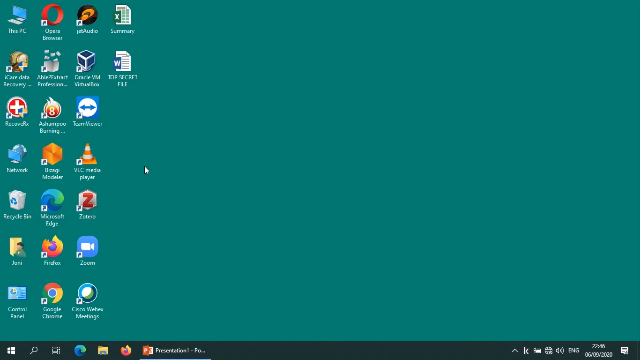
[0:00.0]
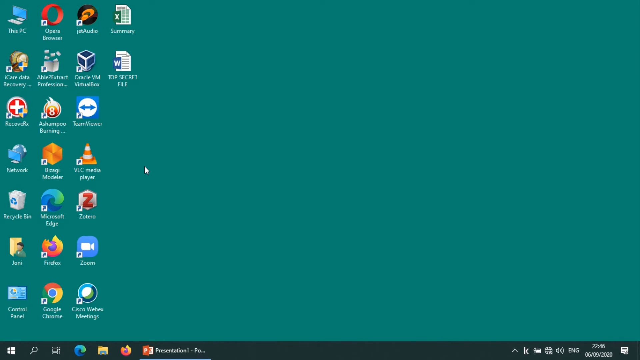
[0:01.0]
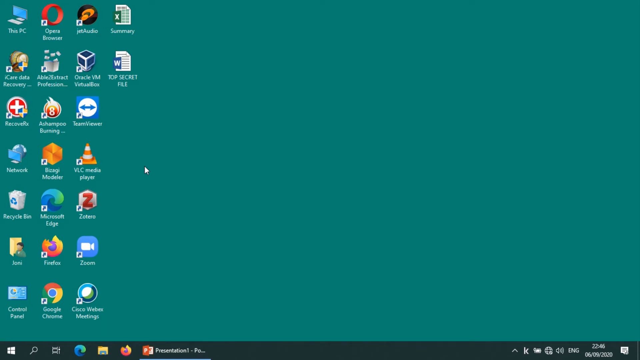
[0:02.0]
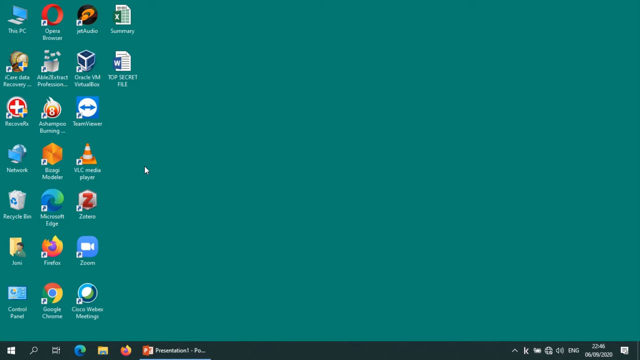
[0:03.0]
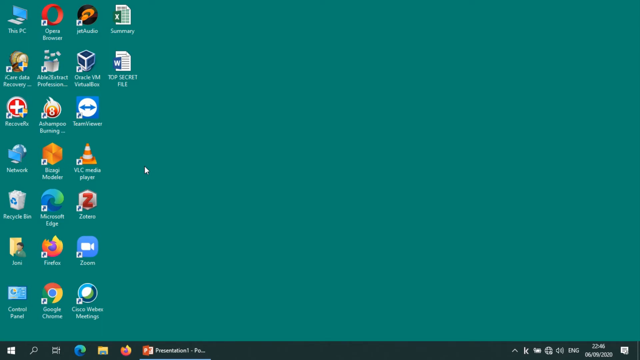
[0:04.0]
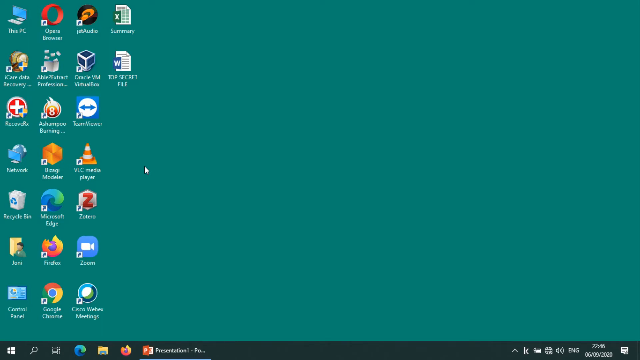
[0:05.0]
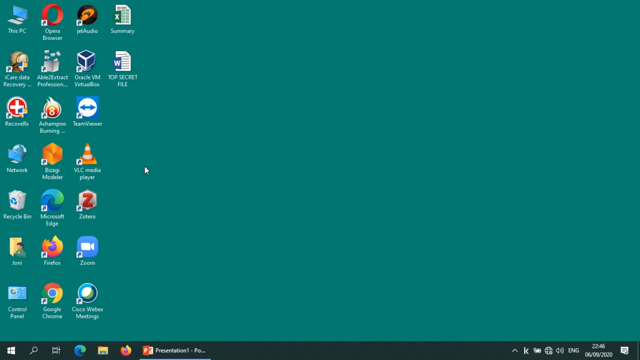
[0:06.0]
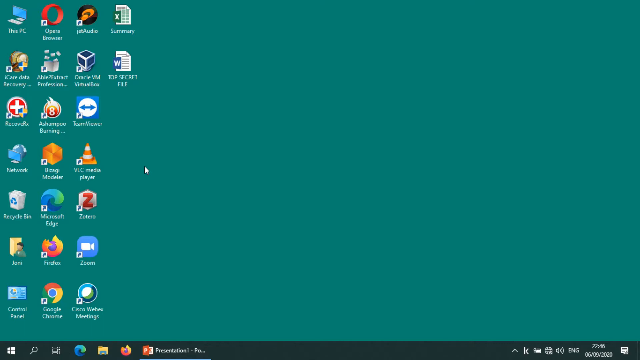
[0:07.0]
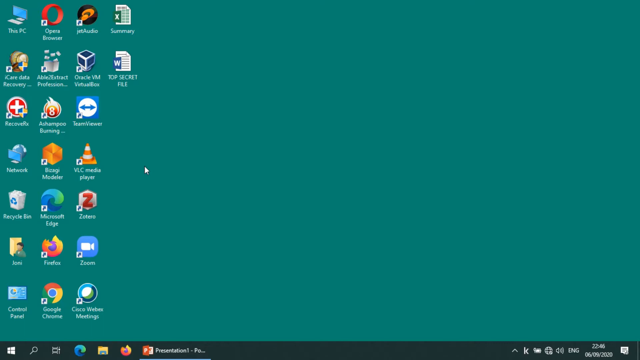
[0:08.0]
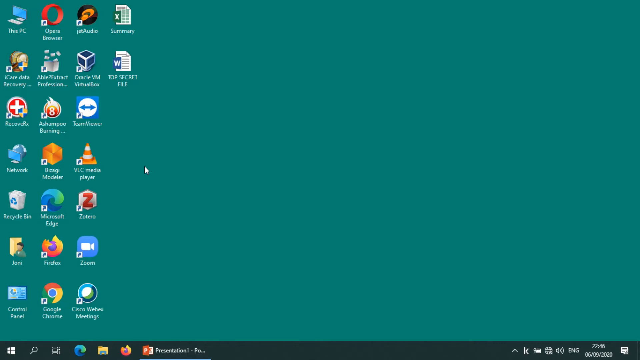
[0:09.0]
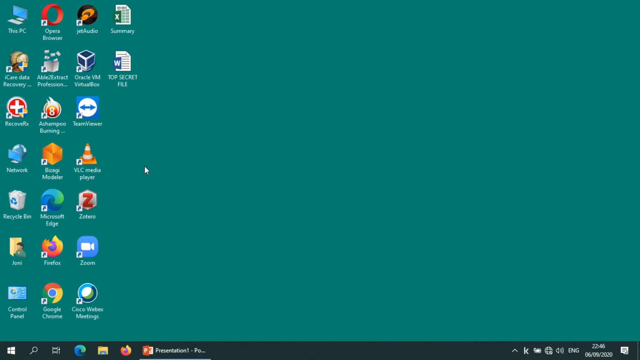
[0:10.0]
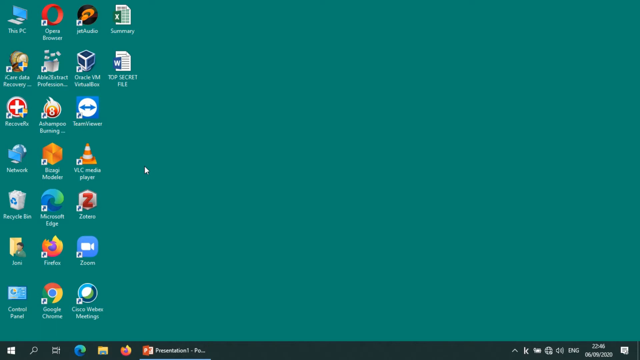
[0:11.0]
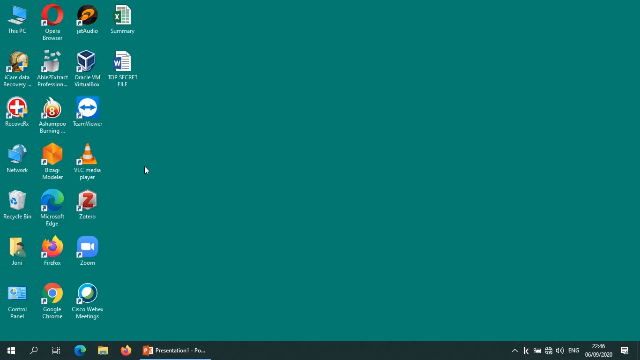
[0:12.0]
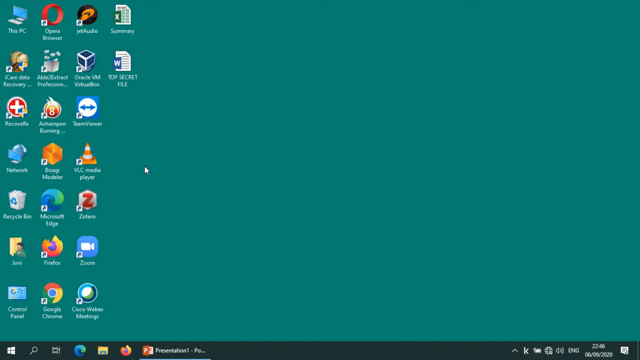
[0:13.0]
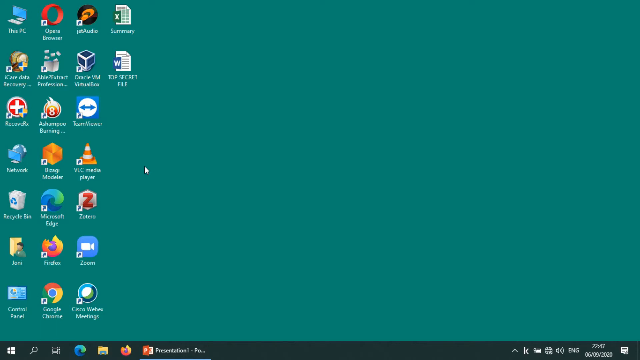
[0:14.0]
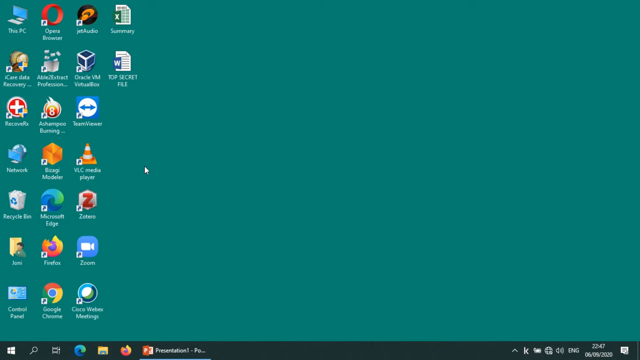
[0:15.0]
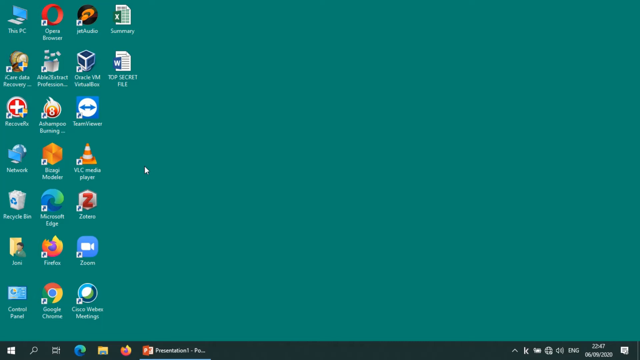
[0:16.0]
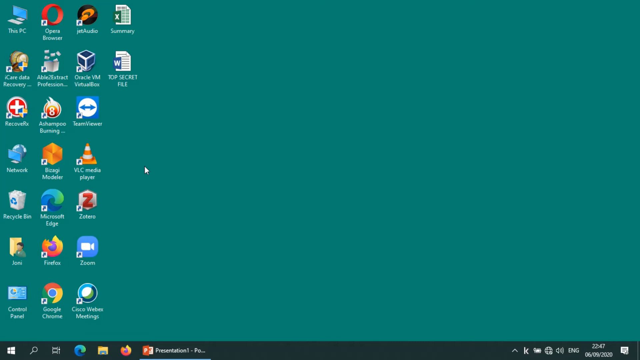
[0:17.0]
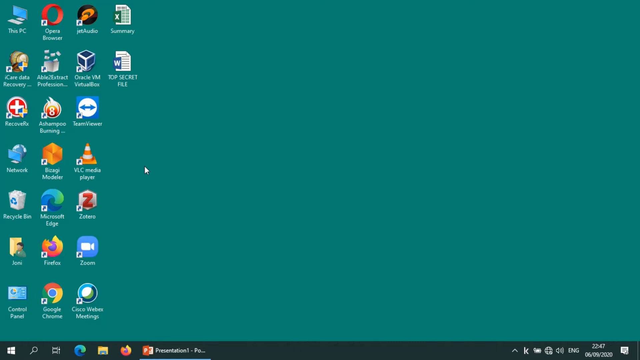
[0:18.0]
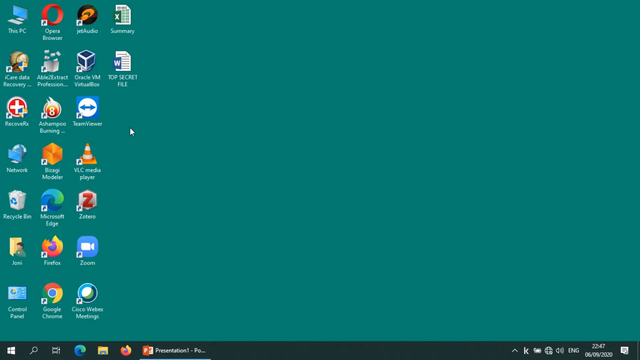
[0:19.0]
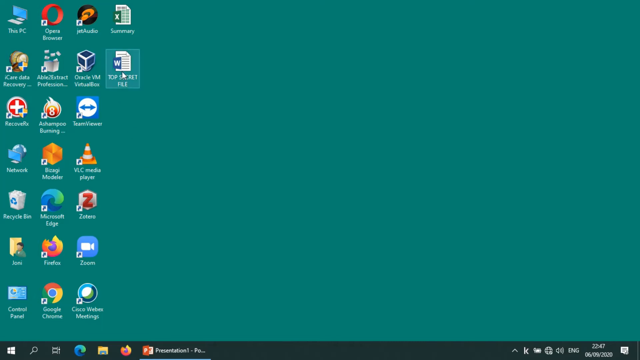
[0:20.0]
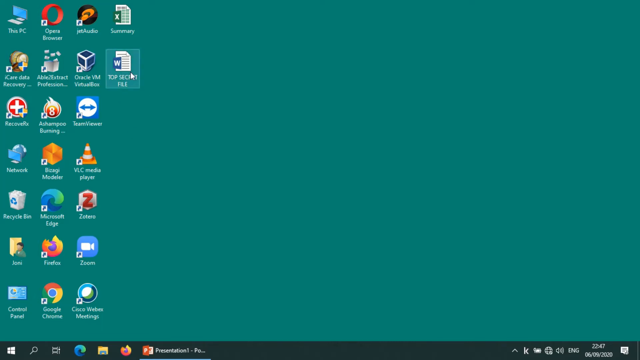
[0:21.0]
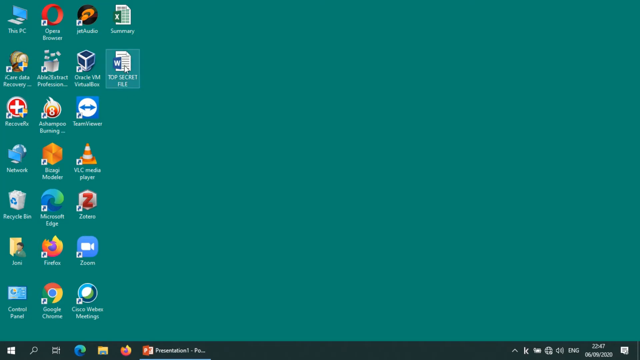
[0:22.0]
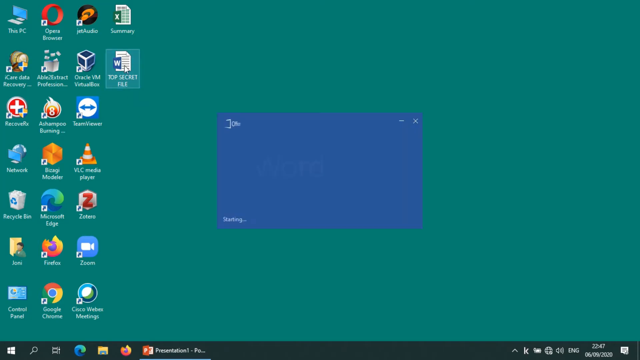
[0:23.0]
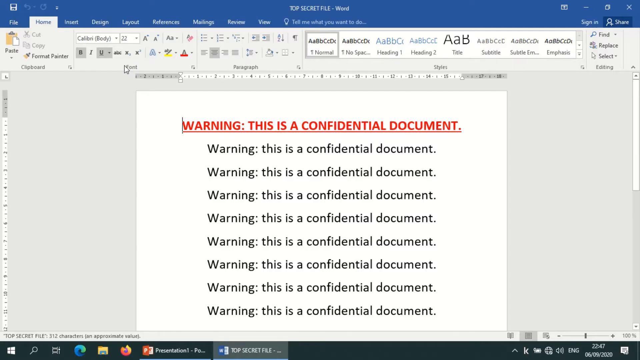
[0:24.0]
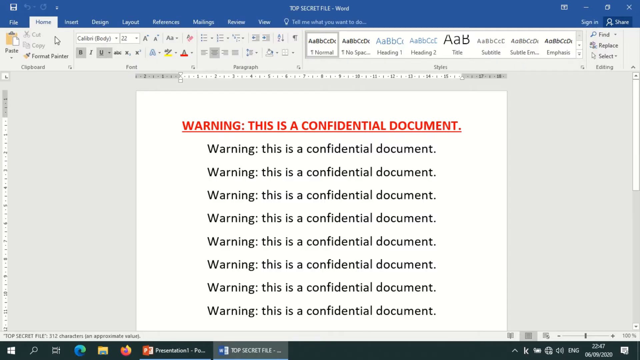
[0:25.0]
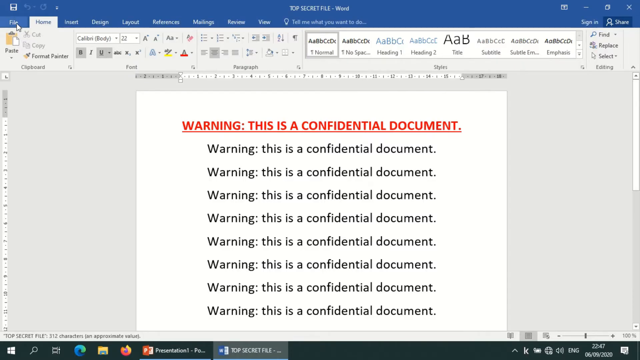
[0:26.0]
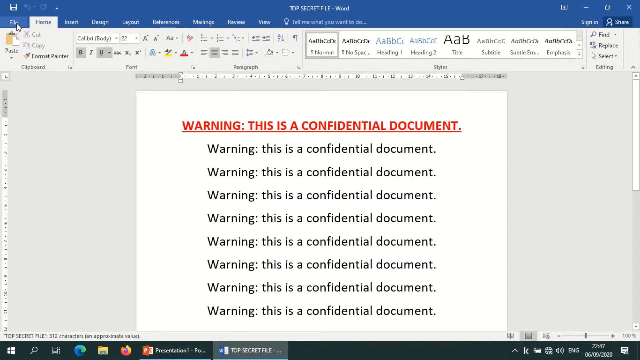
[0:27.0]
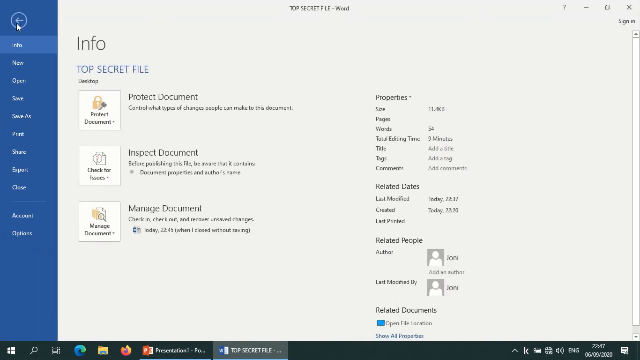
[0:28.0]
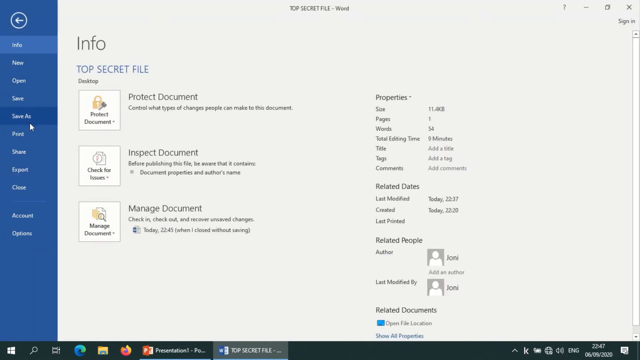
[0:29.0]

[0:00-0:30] A desktop with a green background is displayed, holding many icons: This PC, the Opera browser, JetAudio, an Excel file named "Summary", a TopSecrets file, TeamViewer, VLC, Zoom, Google Chrome, Control Panel, the Recycle Bin, Network and Recovery PC, along with more items. The user apparently clicks on the Word file named TopSecrets, and Word opens. The document contains a warning: "Warning. This is a confidential document."